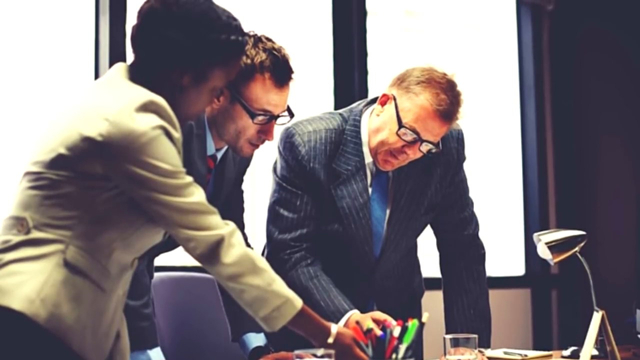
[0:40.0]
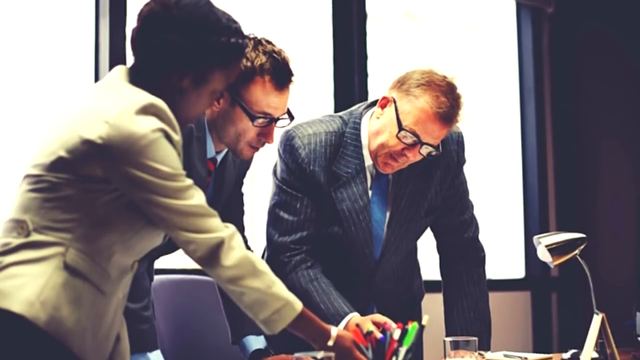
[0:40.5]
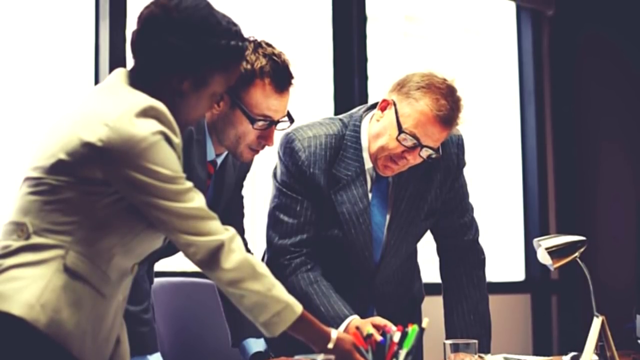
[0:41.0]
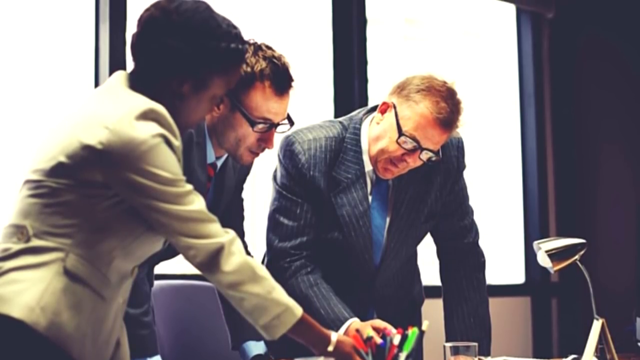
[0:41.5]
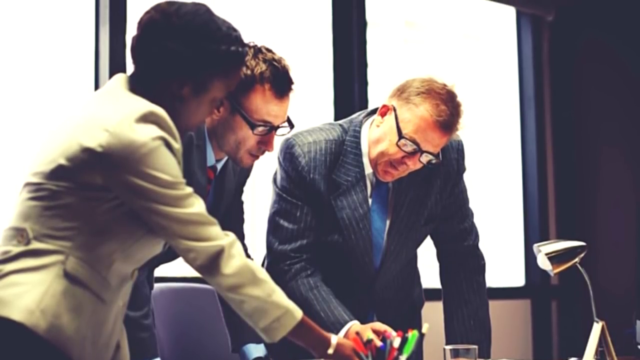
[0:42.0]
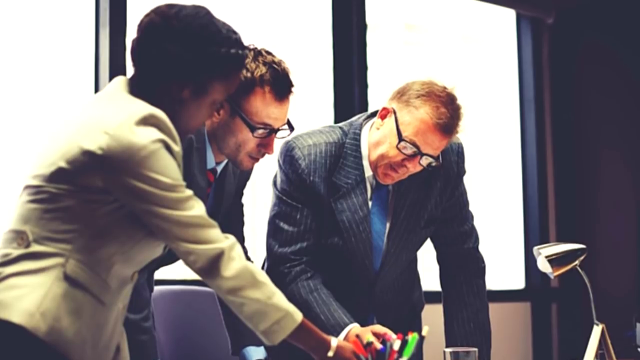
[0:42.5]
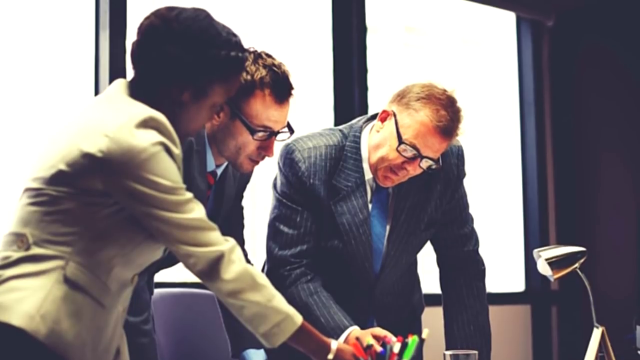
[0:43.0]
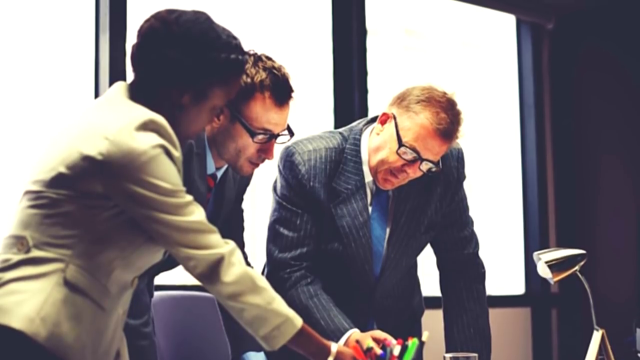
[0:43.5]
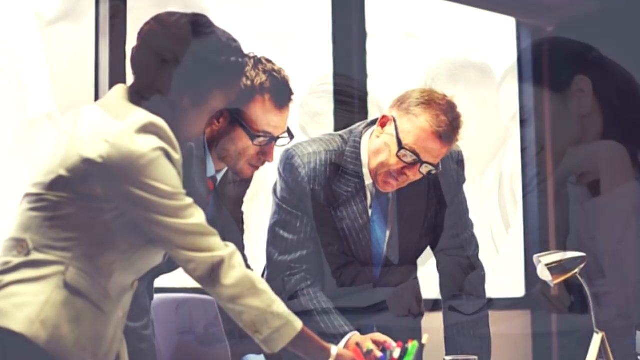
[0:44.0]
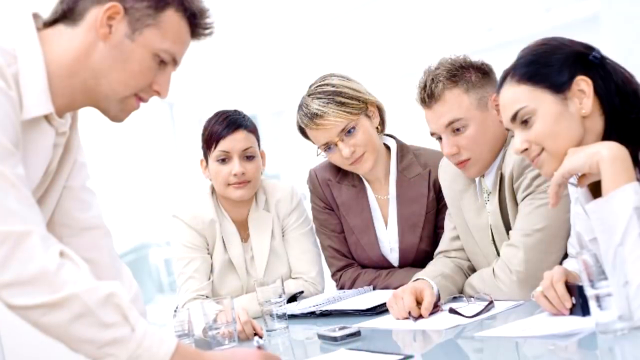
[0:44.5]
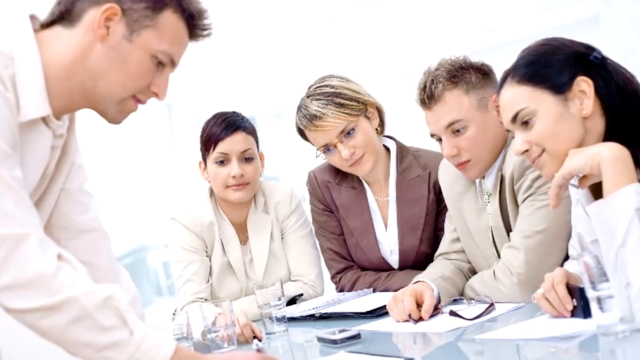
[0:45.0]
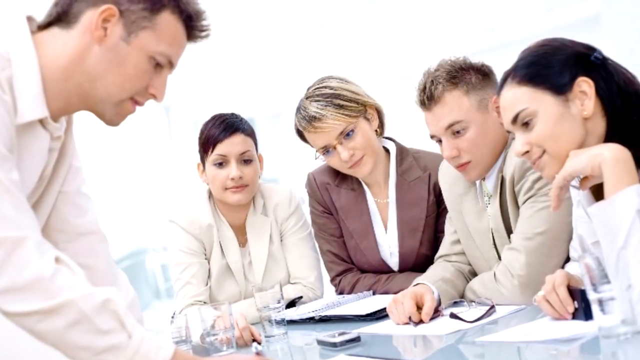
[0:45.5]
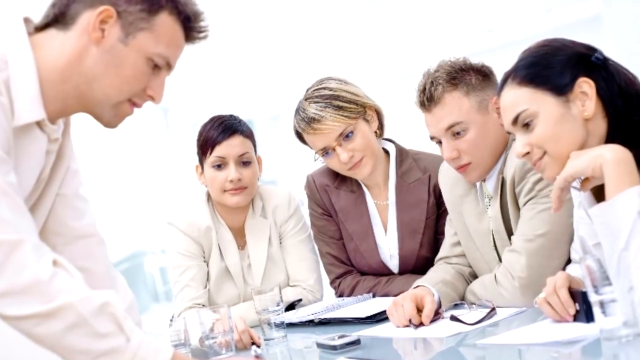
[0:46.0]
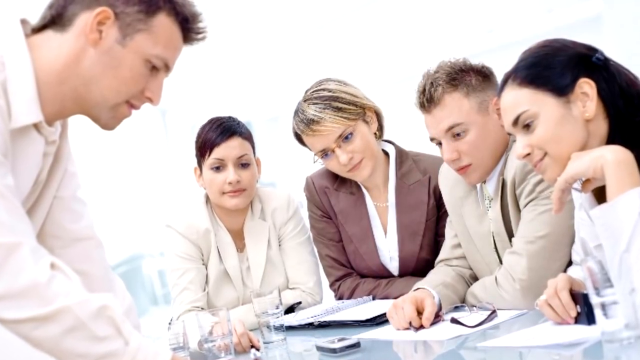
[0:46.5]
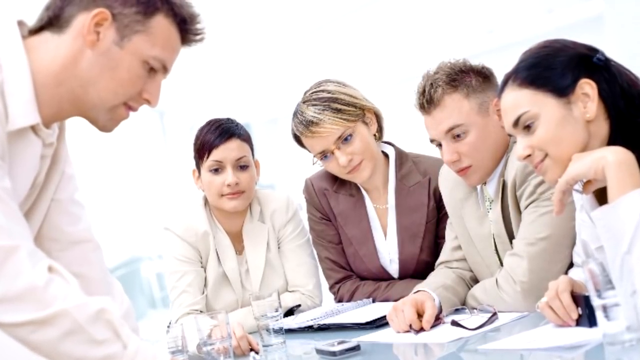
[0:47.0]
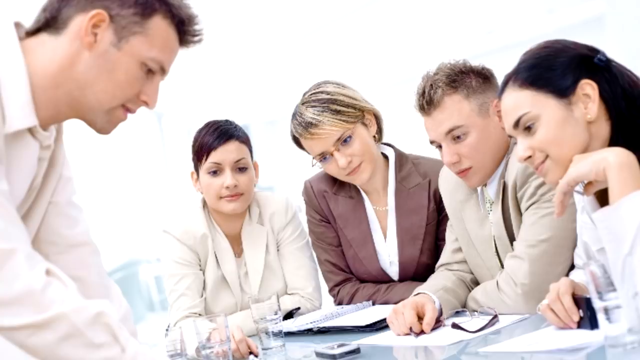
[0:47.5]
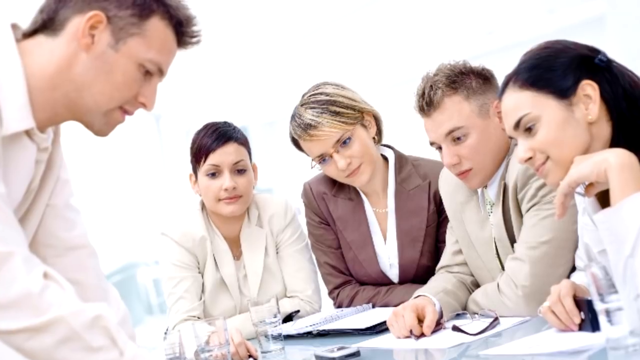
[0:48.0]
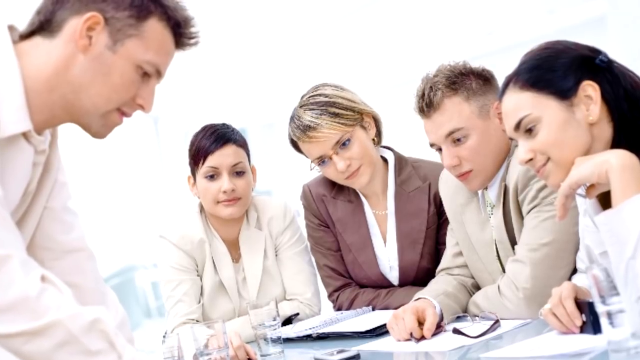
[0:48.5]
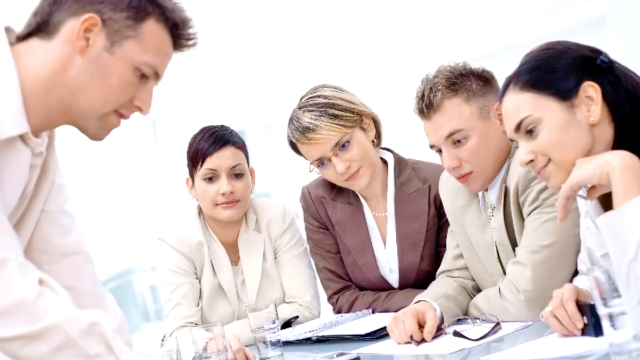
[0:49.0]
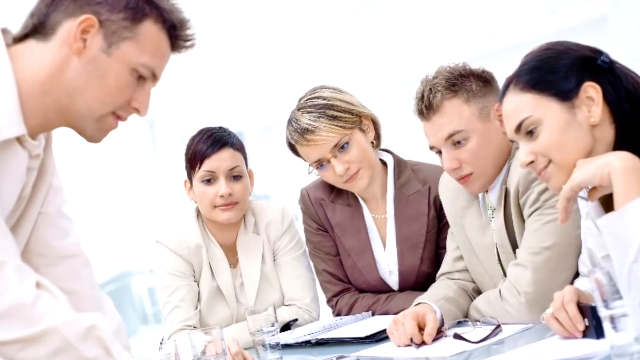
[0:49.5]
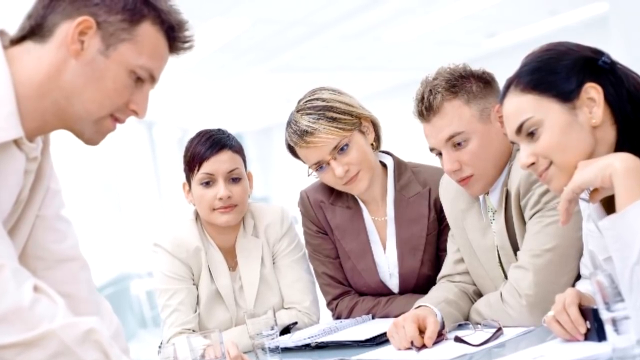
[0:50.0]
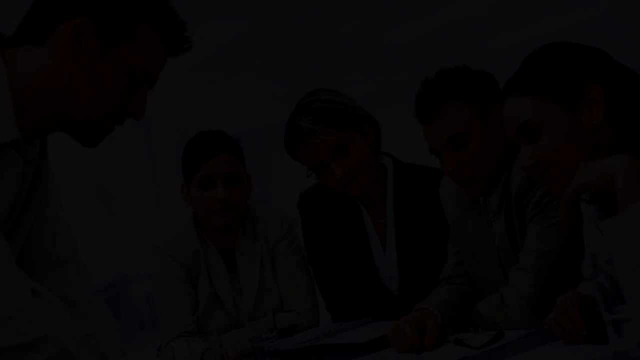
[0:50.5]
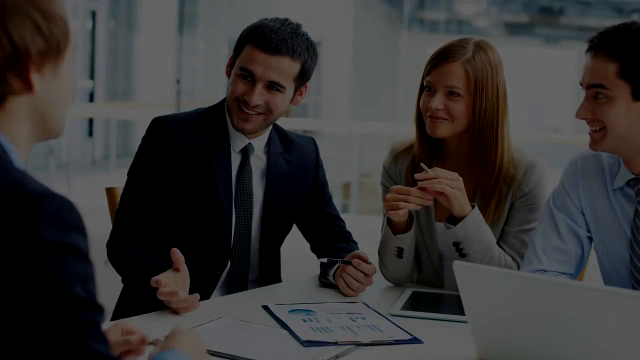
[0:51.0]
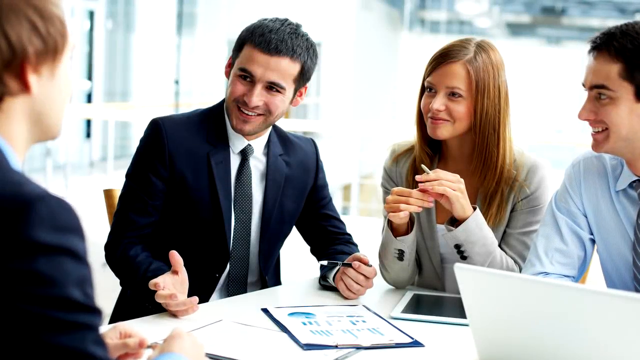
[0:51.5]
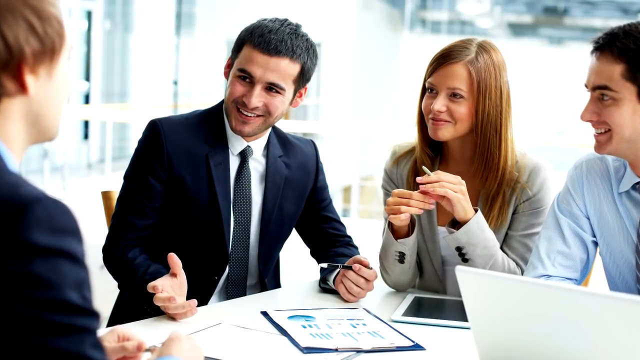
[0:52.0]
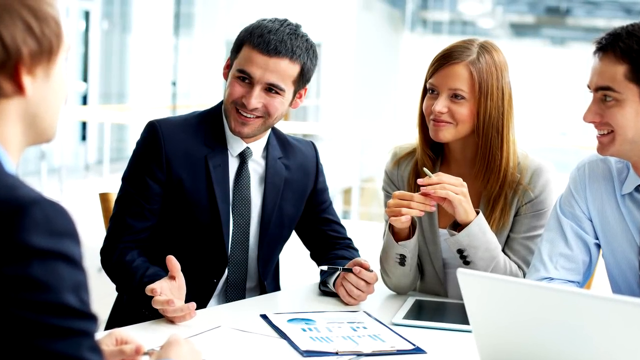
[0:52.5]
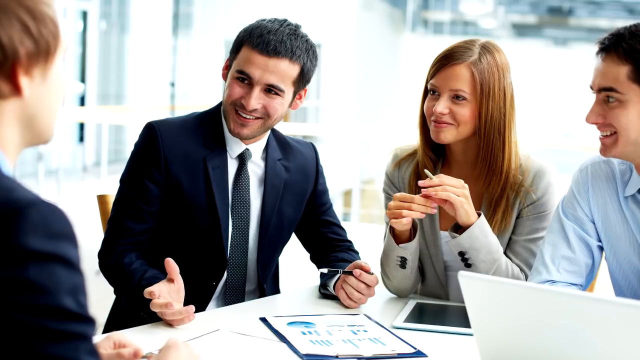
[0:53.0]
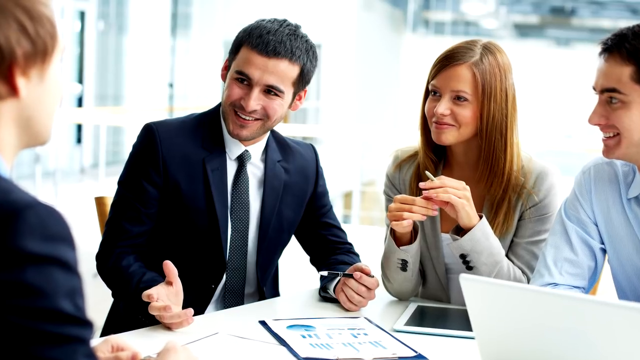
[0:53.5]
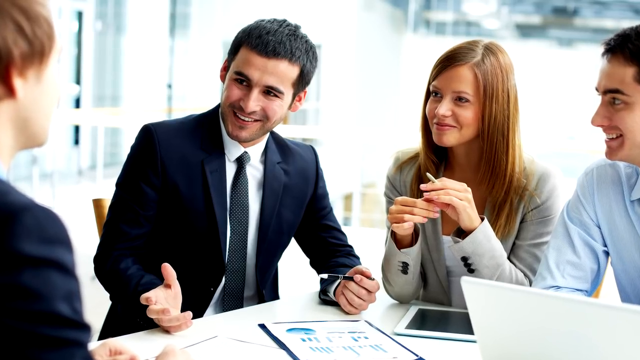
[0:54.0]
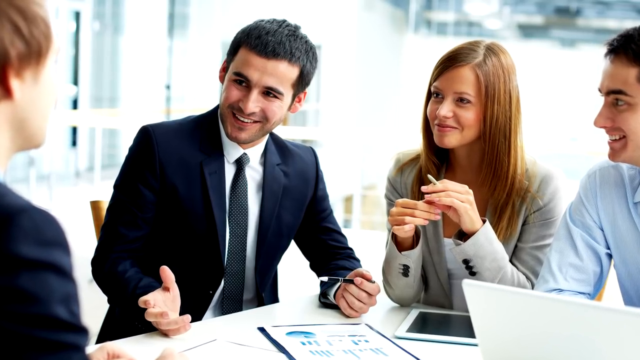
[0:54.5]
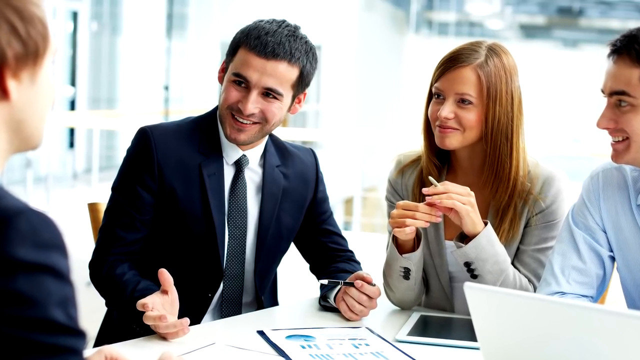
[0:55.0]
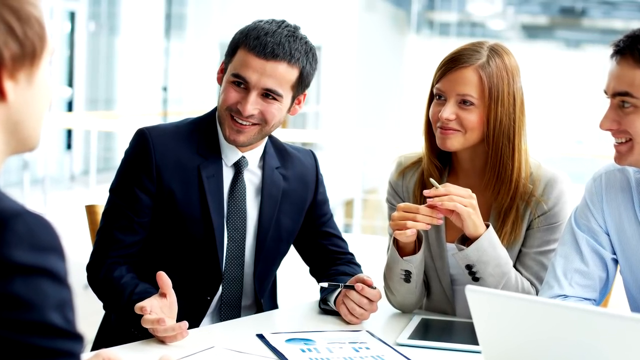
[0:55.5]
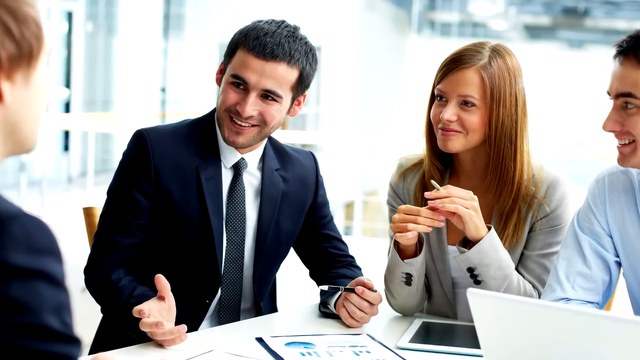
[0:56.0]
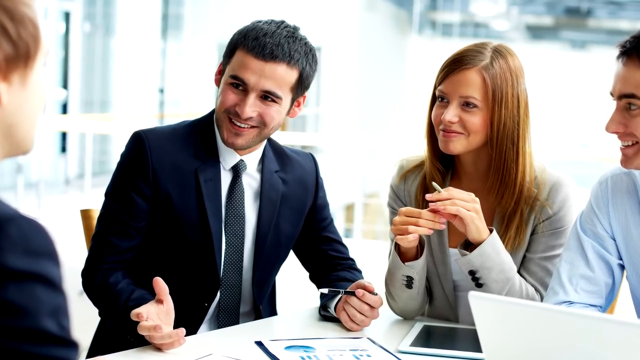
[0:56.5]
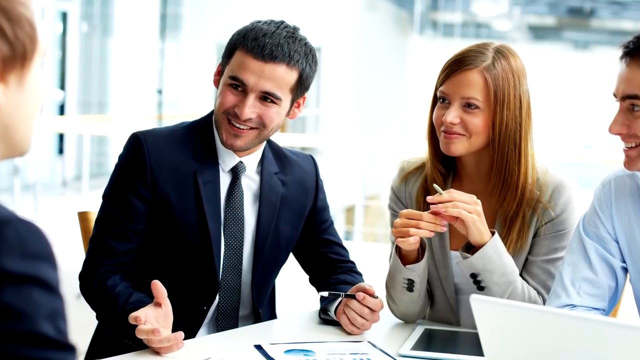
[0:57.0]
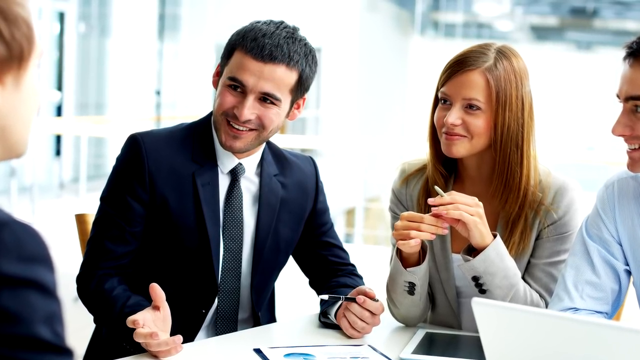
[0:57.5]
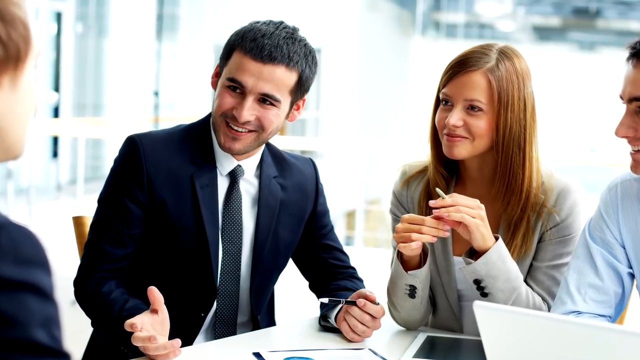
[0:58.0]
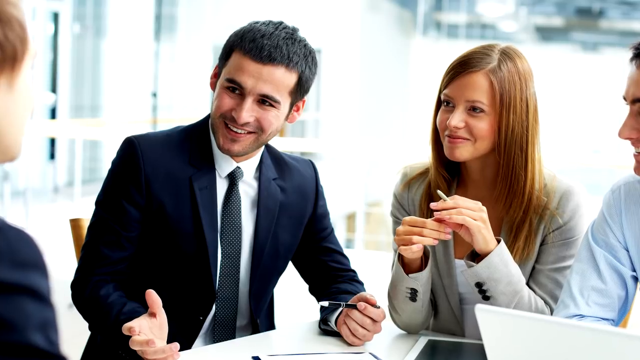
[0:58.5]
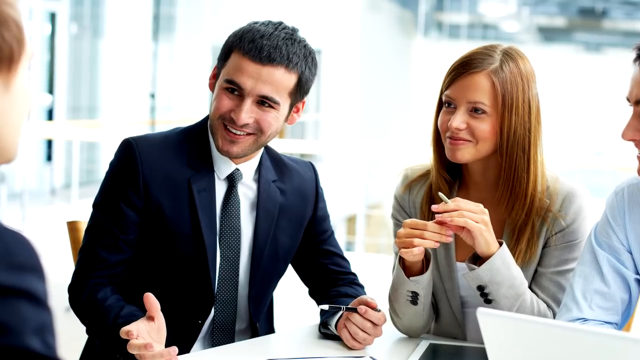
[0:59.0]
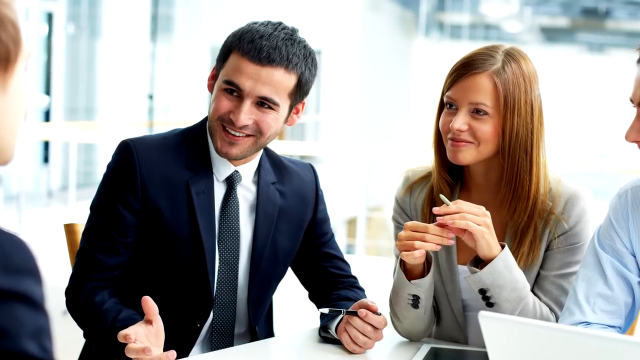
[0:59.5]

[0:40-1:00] Three people who appear to be standing look down at a document on a table. They are dressed professionally: two men who look to be Caucasian and an African-American woman. A little desk lamp shines down on the document, and all three are standing behind a large window. Next comes what looks like an office meeting: four people sit on one side of a table, and on the other side is another man who appears to be standing; they all seem to be looking at something on the table. Everyone is dressed professionally, two men and three women, all in neutral colors except one woman in a pinkish-red jacket. The video then switches to another office meeting scene at a square table, seen where two ends meet. Two people, a man and a woman, are clearly visible, while two others are only partly visible, and they all seem to be looking at one man, who cannot really be seen, who is talking.